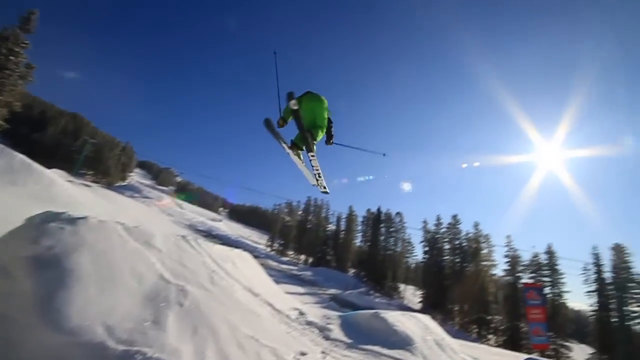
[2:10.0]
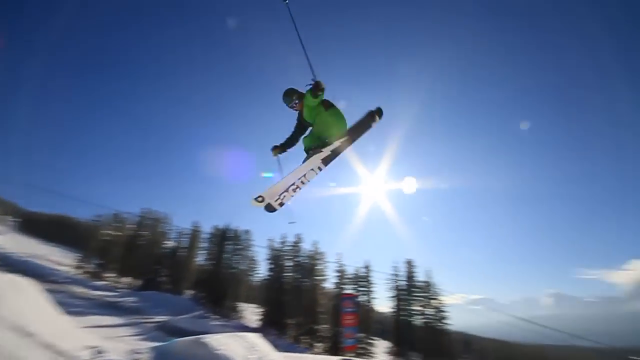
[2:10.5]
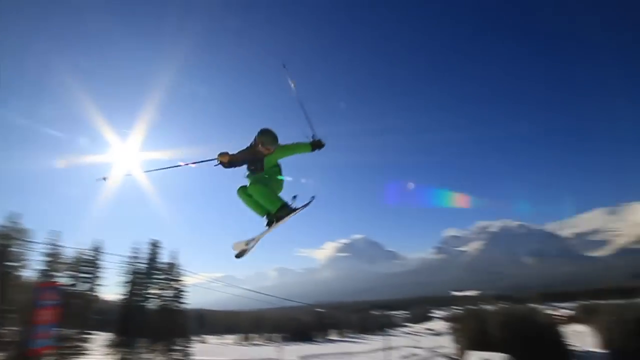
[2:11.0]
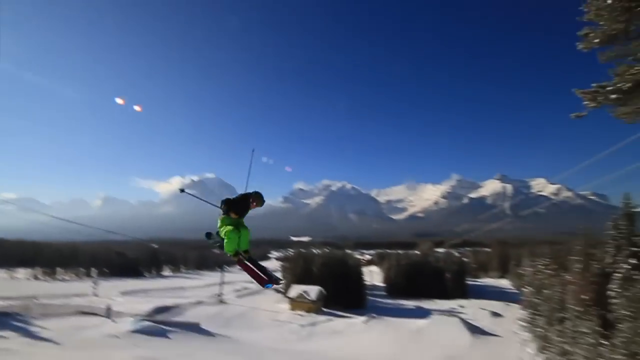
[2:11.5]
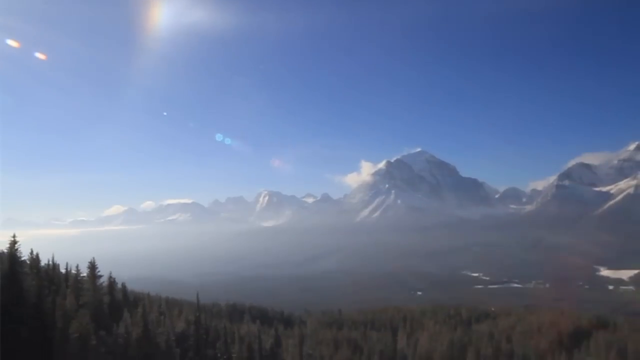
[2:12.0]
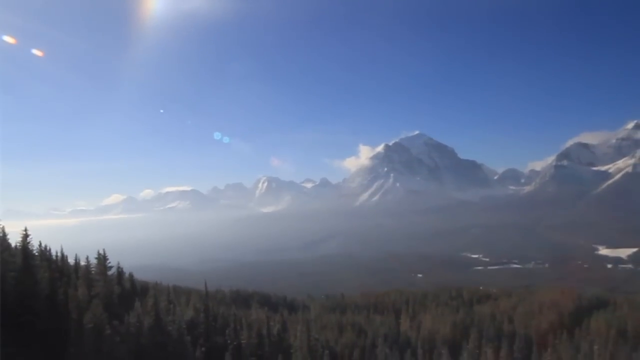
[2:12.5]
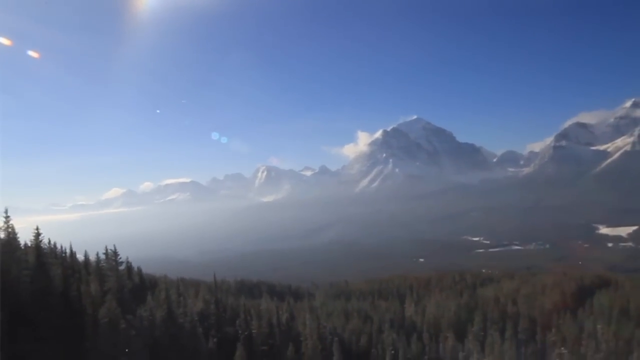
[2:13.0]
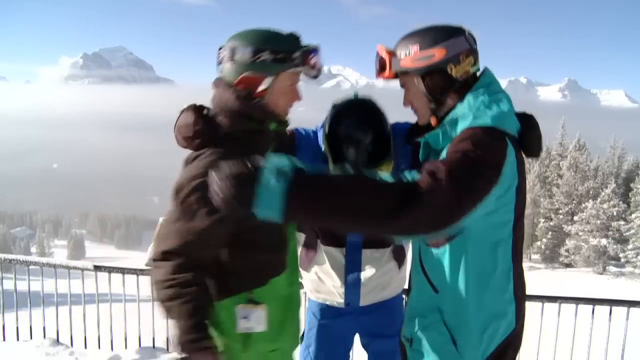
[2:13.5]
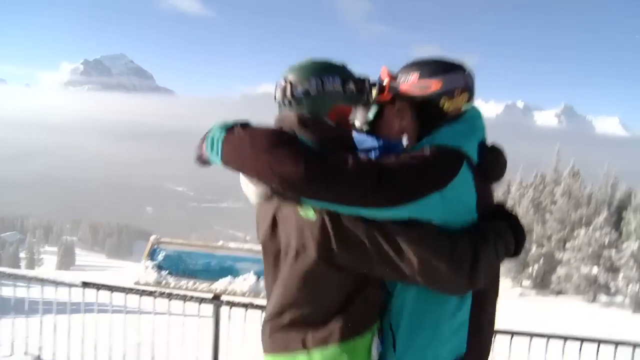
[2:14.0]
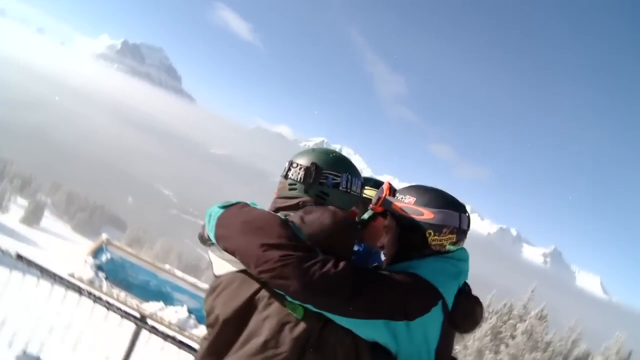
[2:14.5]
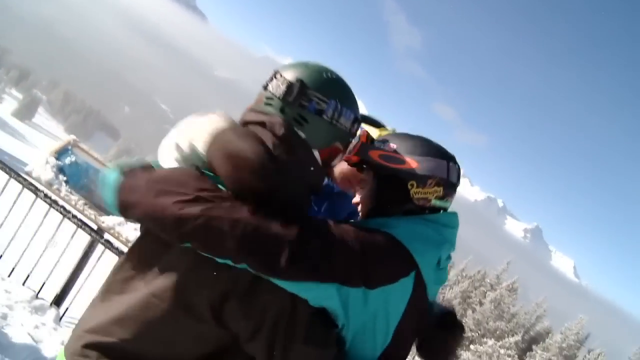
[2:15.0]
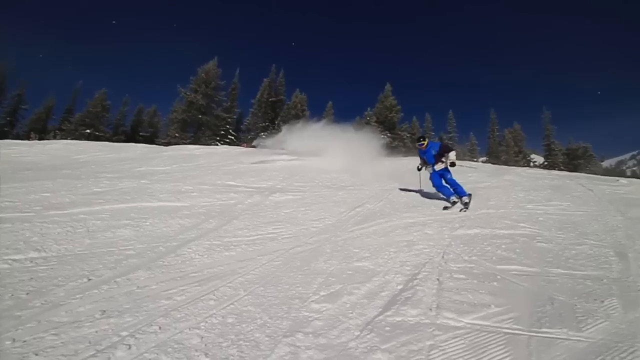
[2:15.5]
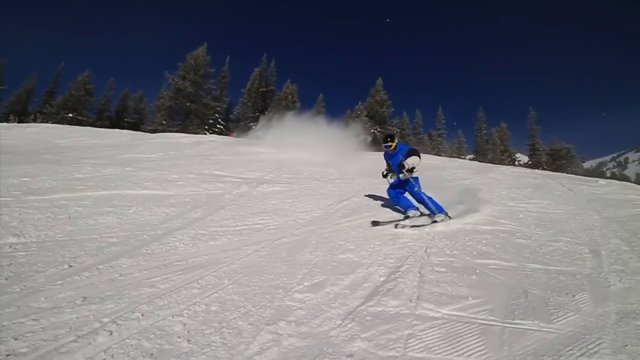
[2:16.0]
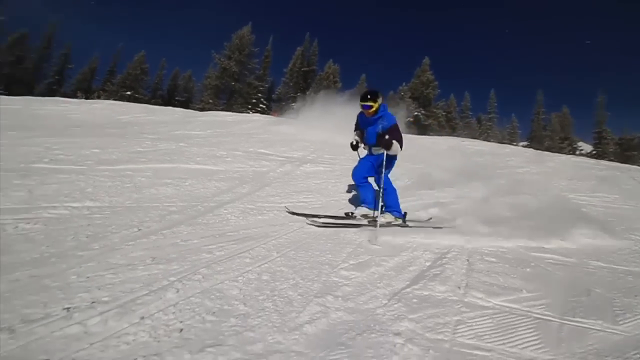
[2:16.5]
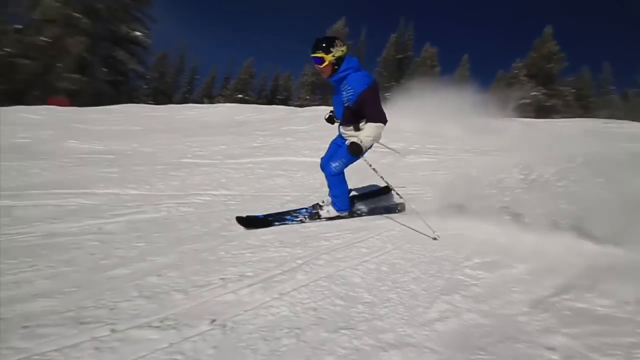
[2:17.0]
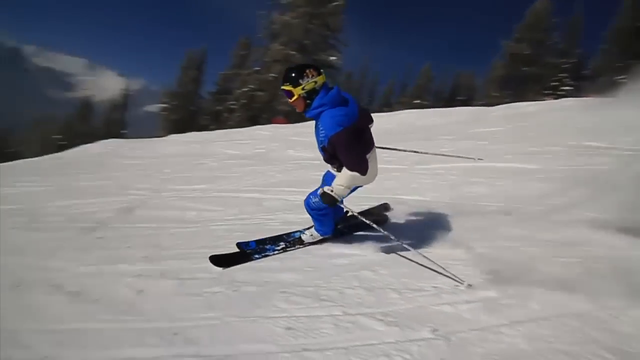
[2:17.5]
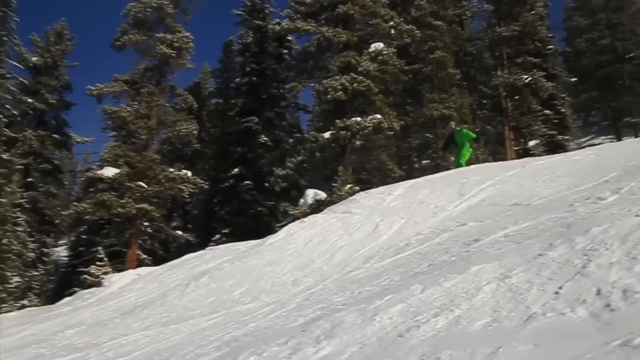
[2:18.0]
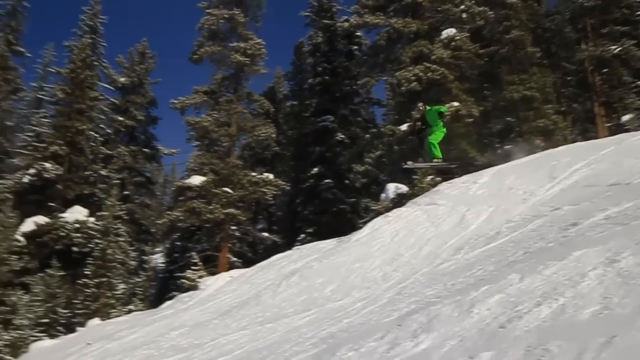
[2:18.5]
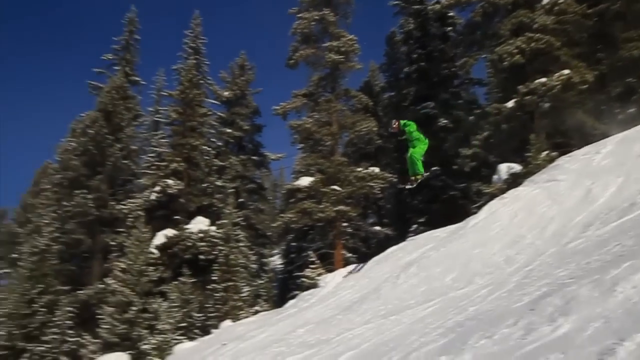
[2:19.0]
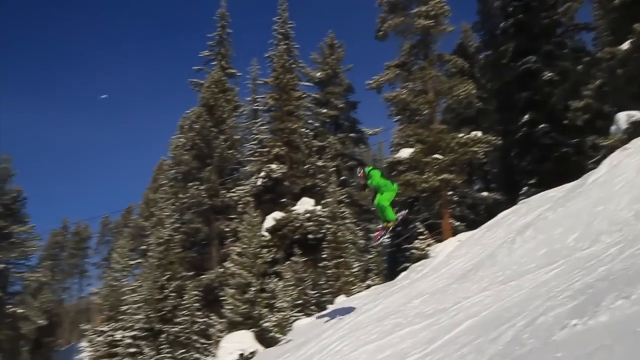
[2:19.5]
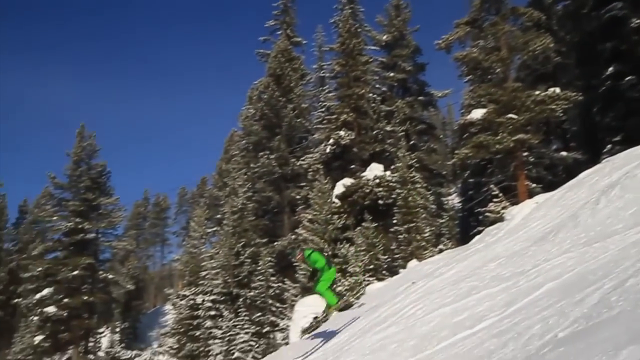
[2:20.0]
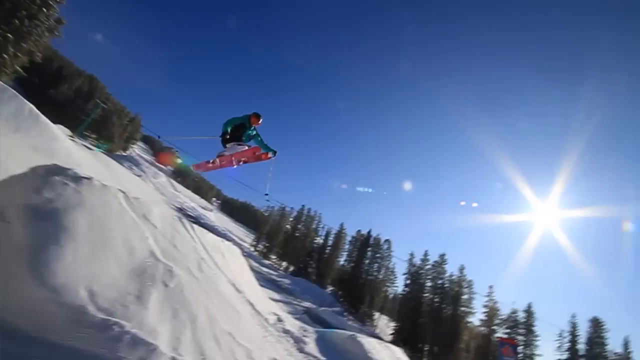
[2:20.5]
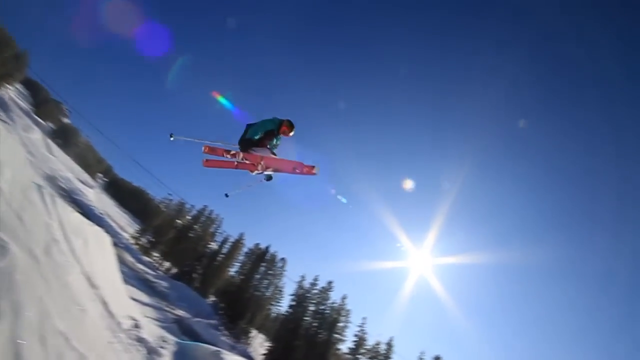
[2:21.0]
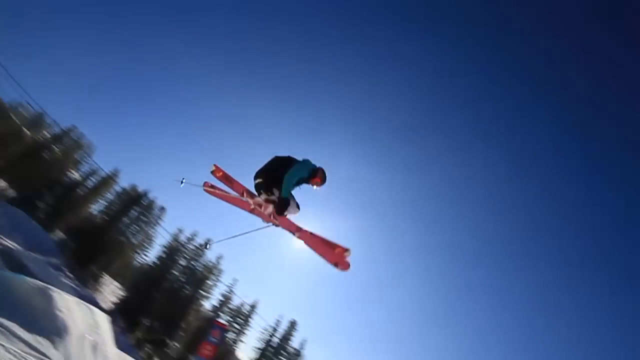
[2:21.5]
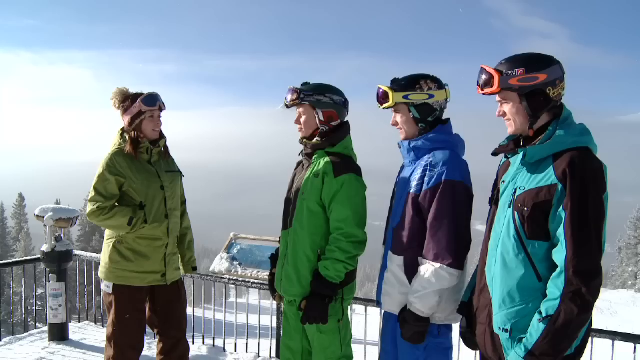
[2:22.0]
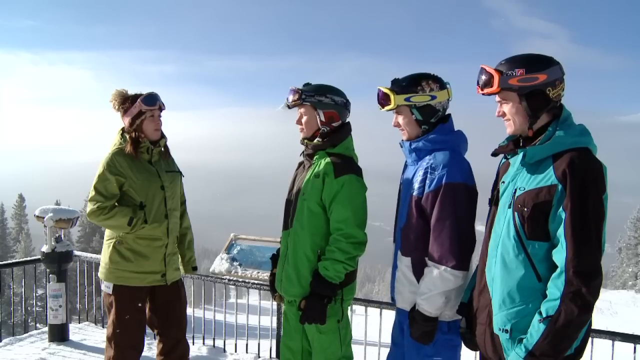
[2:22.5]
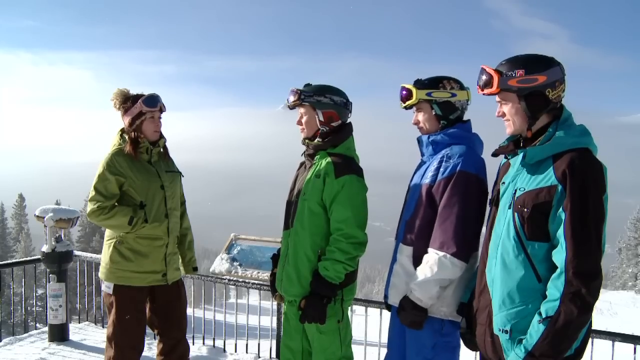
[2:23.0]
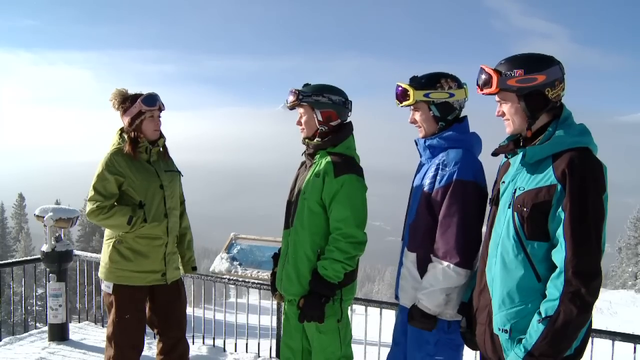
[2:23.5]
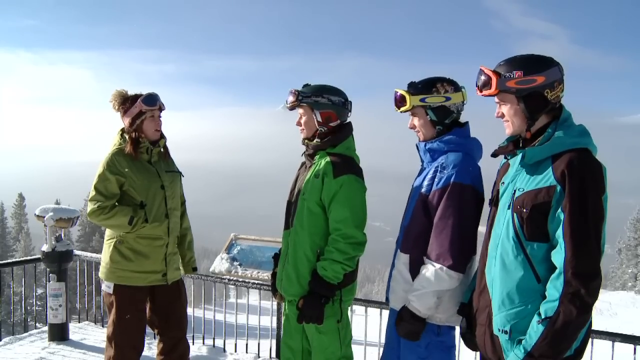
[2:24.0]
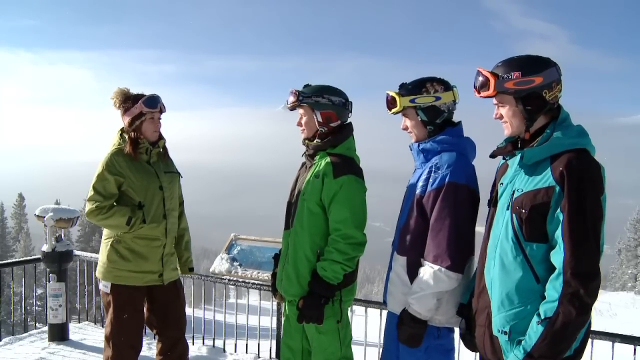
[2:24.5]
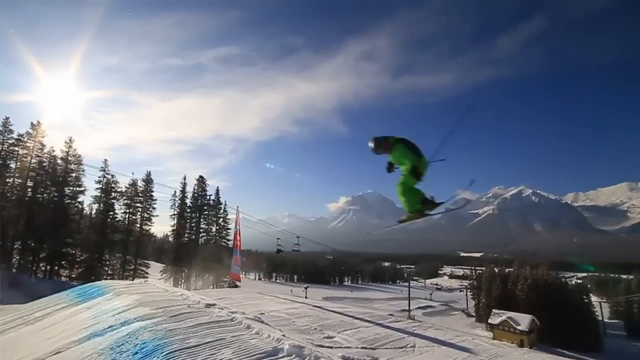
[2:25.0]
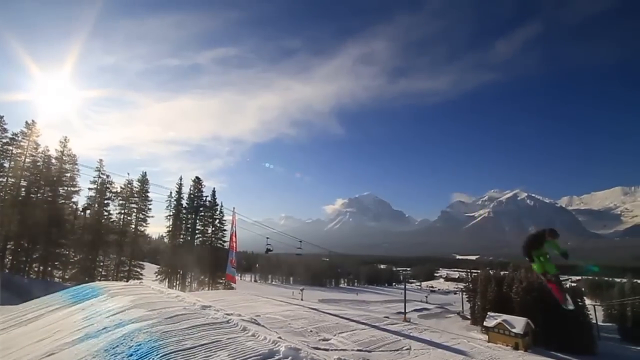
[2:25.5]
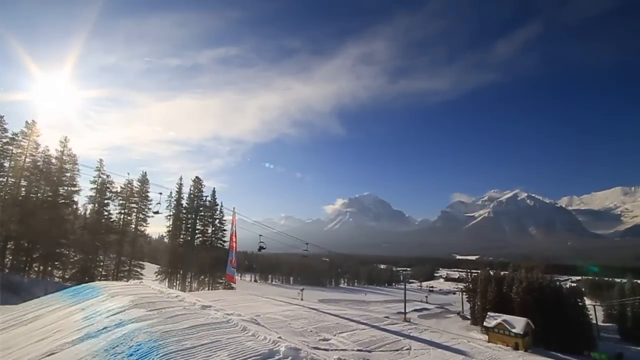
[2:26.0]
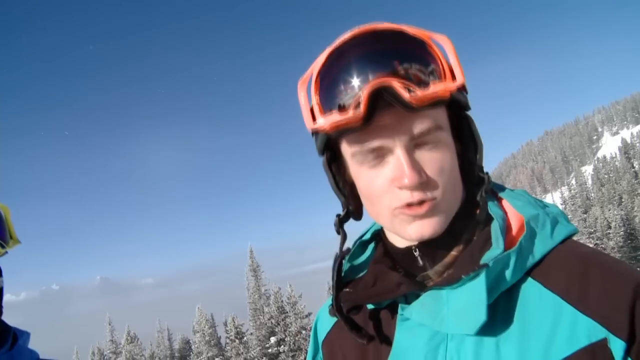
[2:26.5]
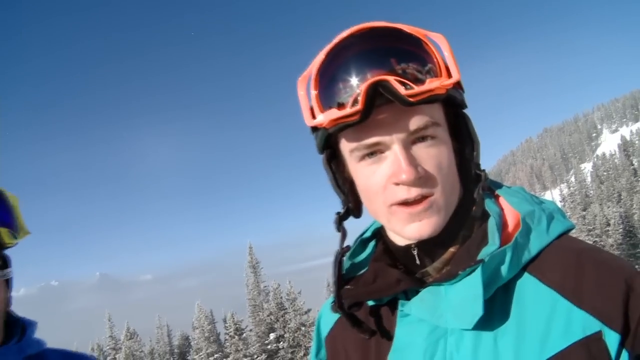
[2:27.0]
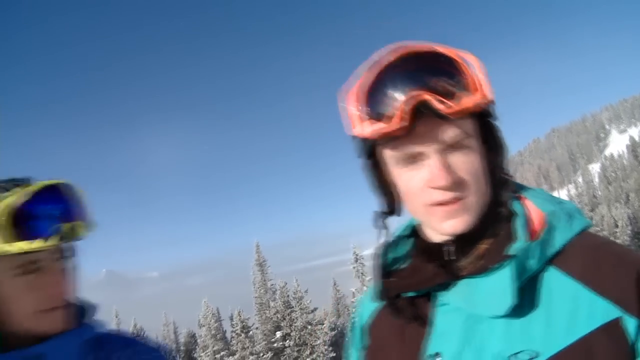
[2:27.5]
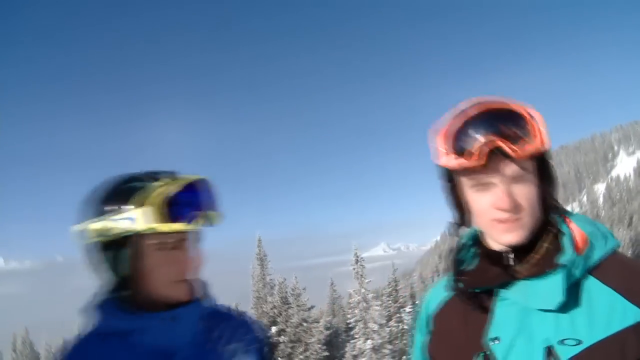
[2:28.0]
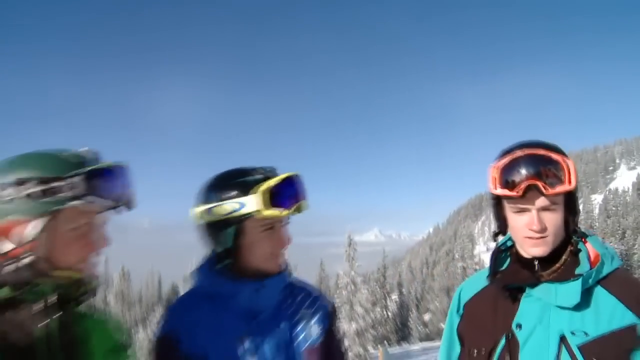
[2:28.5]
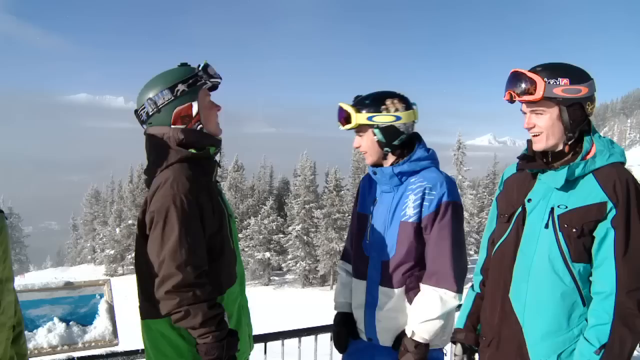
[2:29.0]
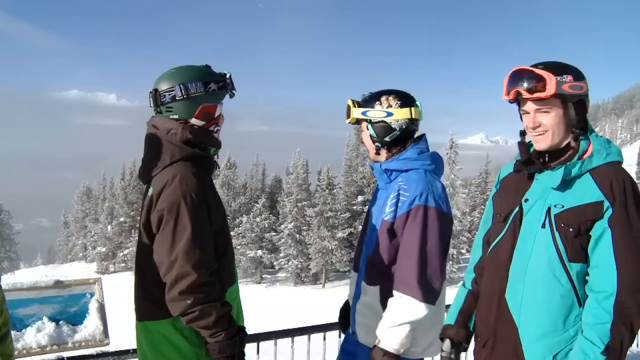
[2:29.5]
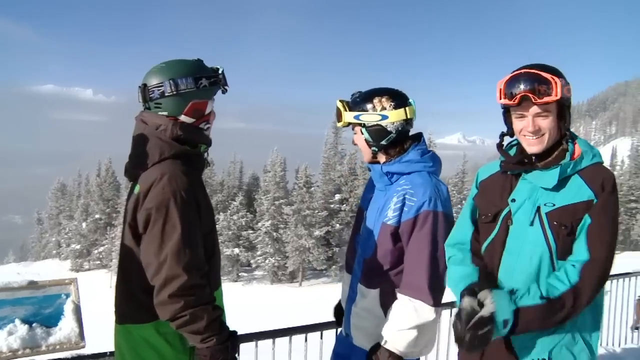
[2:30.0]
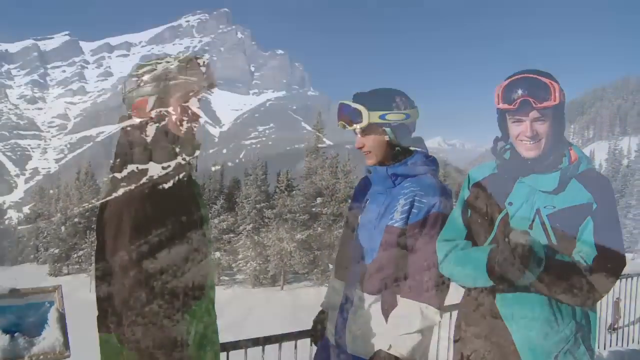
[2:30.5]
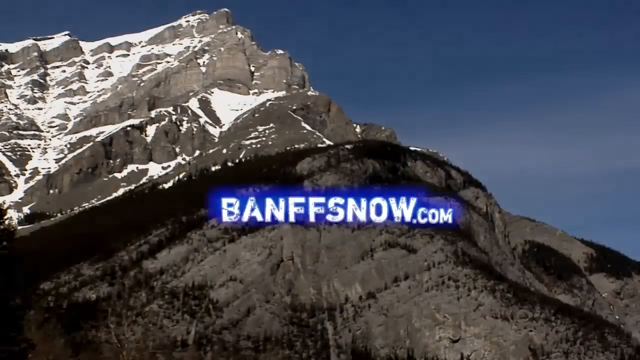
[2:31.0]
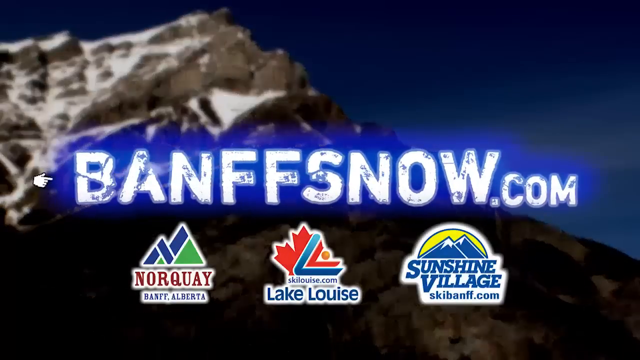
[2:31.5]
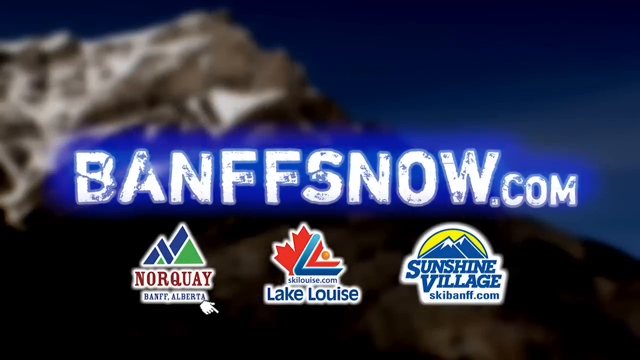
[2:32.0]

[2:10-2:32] One of the kids does a jump in the air, followed by a mountain shot. The kids hug, and another person goes down on skis; it is the kid in green, and then one does a jump. The video cuts to a lookout where the background is very hazy, with very thin clouds. The woman is again on the left and the boys on the right, with the sun directly in their faces. More jumps are shown. The kid in gray talks, and the shot kind of zooms out from them as they kind of look around. The text "banffsnow.com" appears, followed by Banff Alberta, Lake Louise and Sunshine Village, with "skibanff.com", shown as logos.